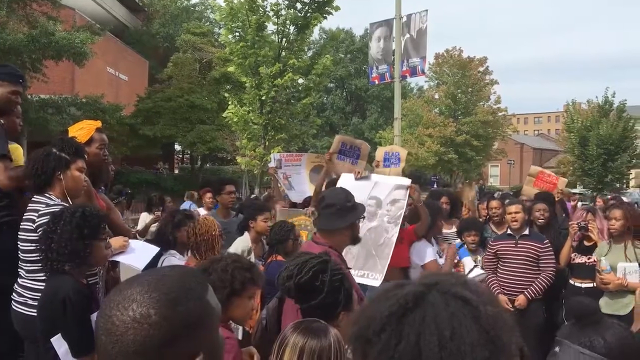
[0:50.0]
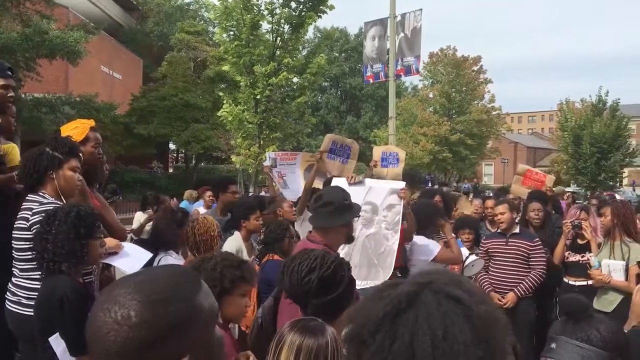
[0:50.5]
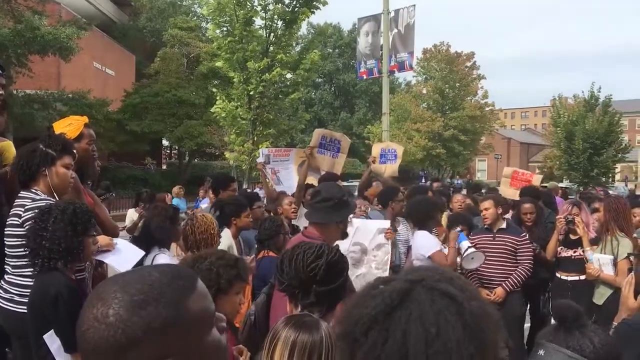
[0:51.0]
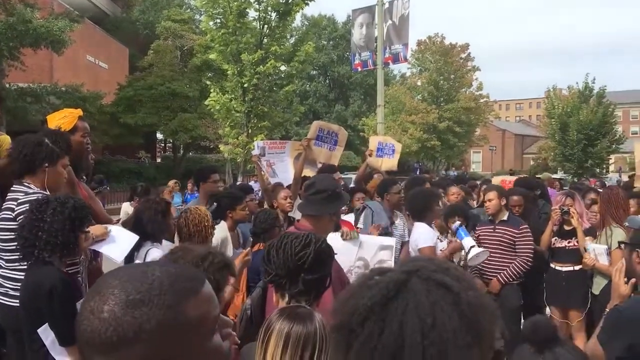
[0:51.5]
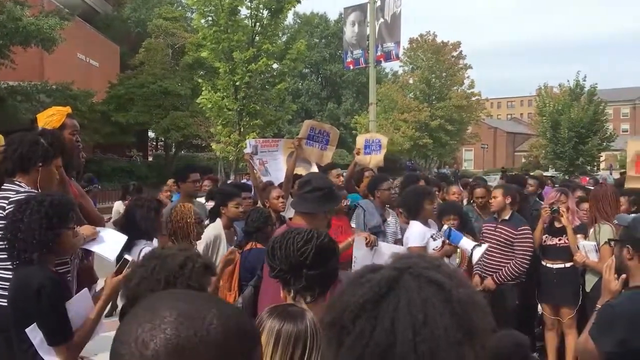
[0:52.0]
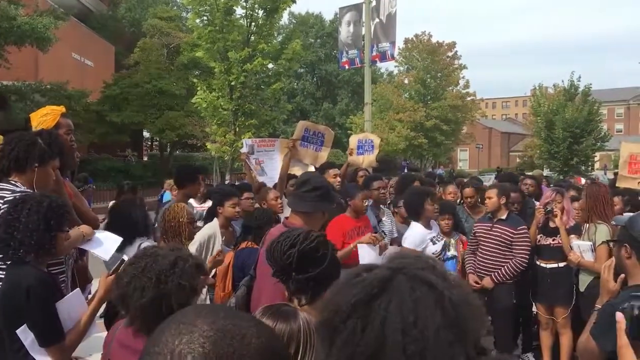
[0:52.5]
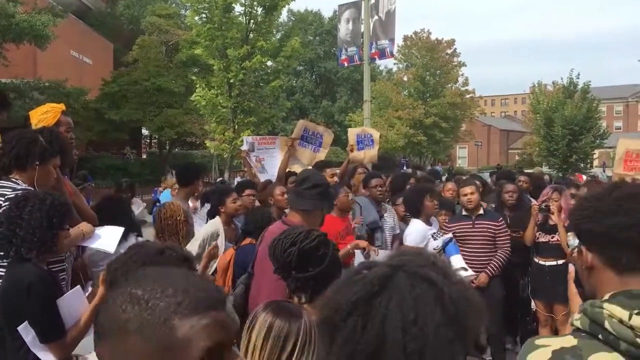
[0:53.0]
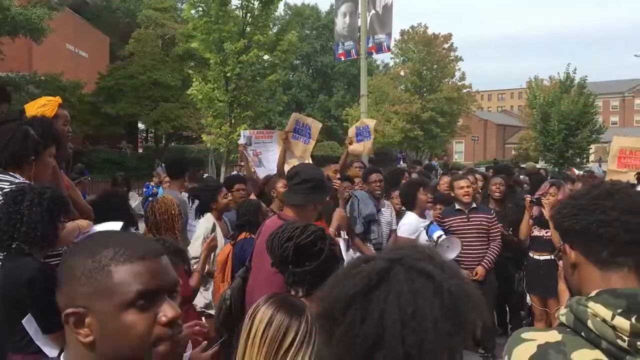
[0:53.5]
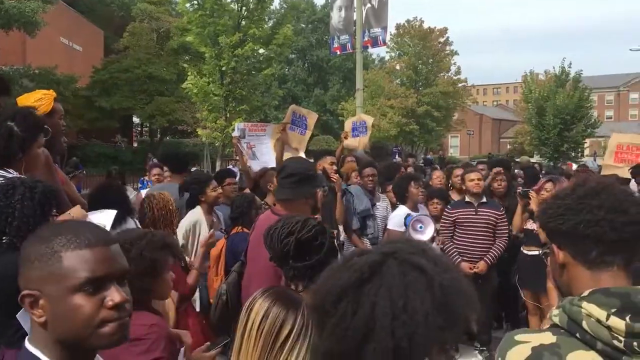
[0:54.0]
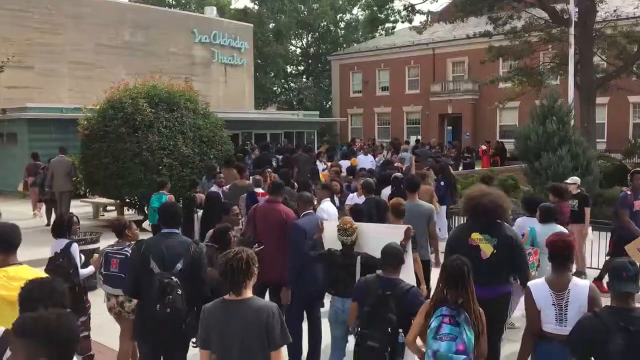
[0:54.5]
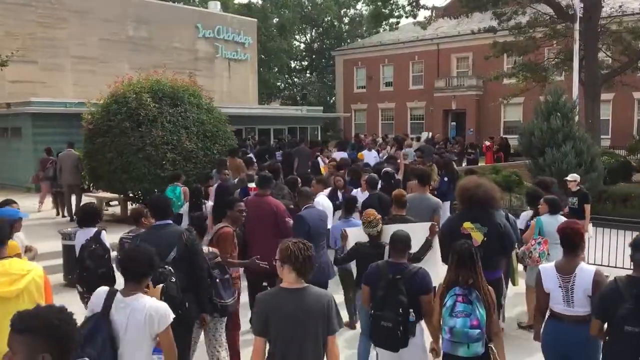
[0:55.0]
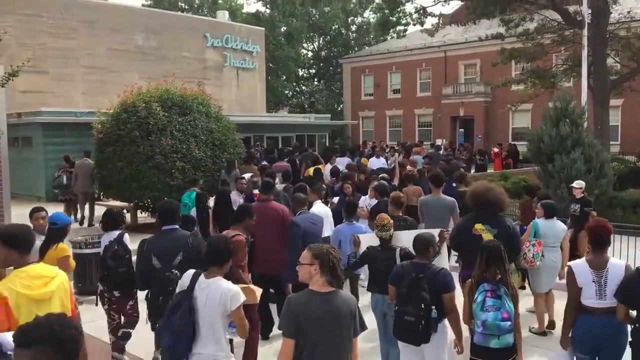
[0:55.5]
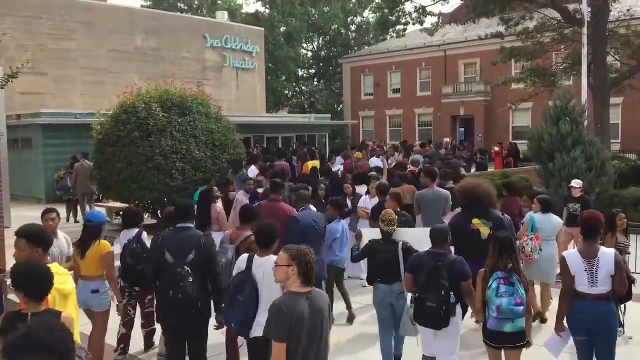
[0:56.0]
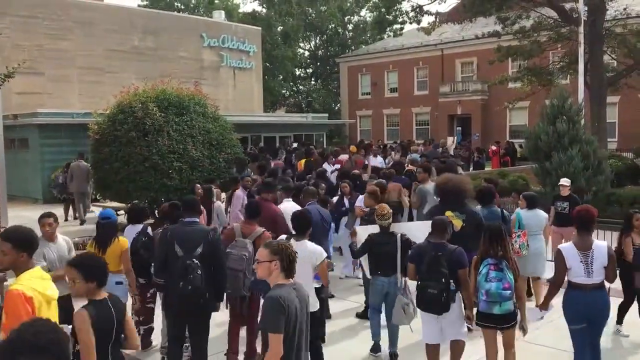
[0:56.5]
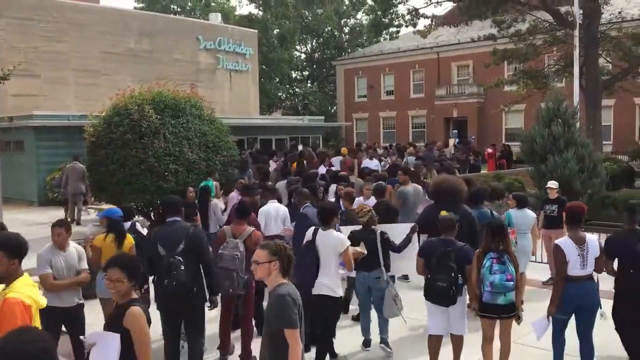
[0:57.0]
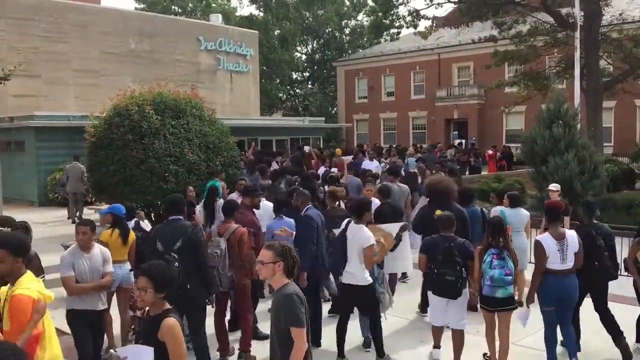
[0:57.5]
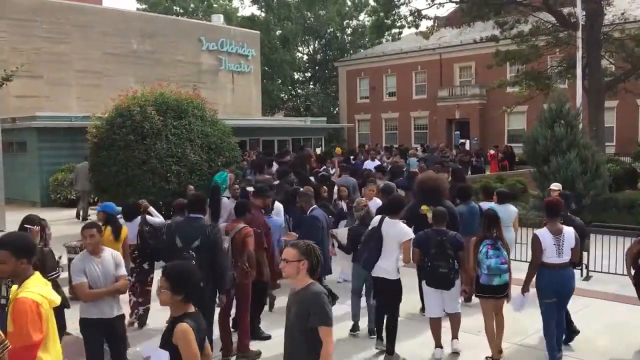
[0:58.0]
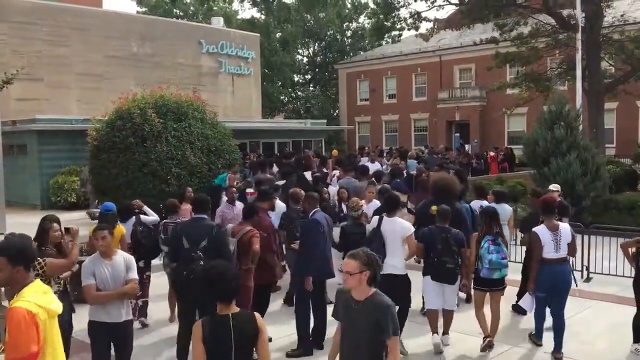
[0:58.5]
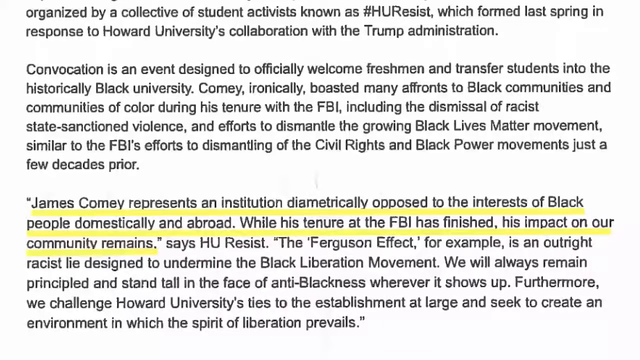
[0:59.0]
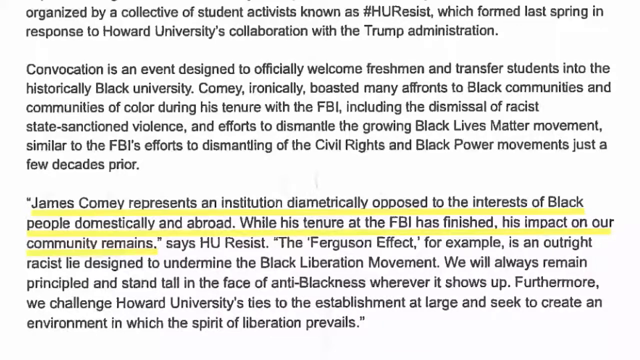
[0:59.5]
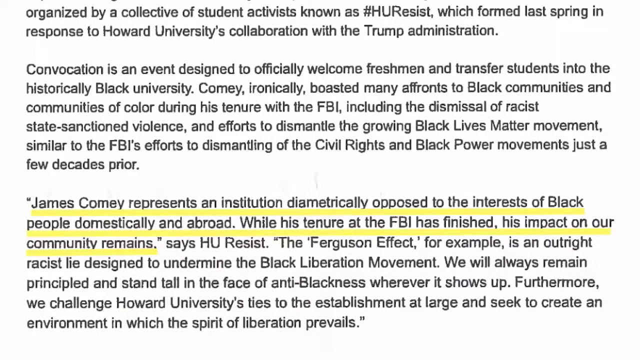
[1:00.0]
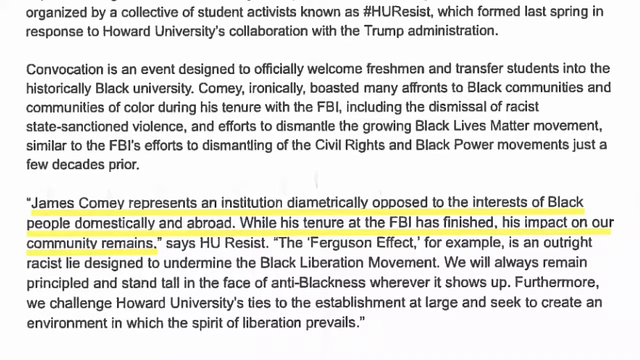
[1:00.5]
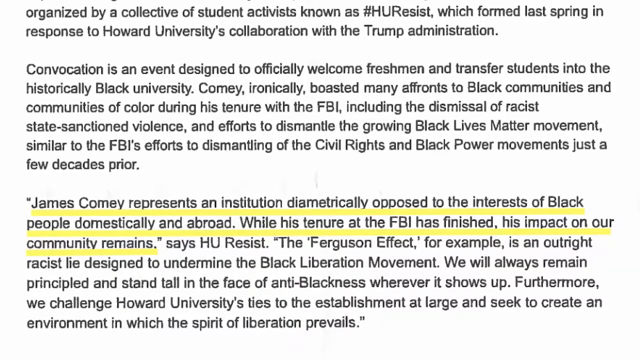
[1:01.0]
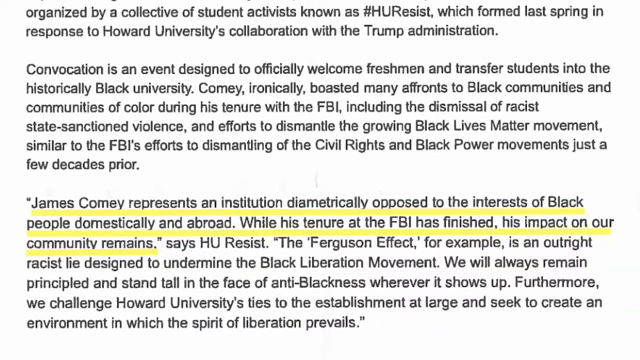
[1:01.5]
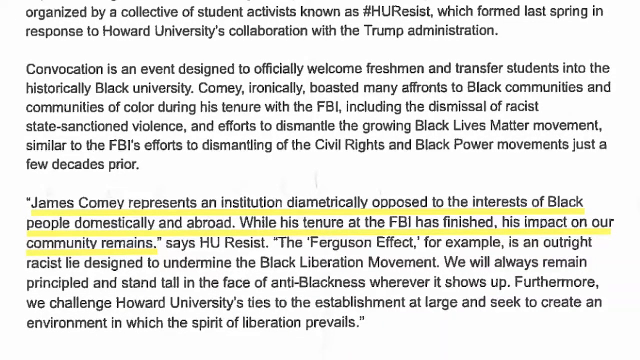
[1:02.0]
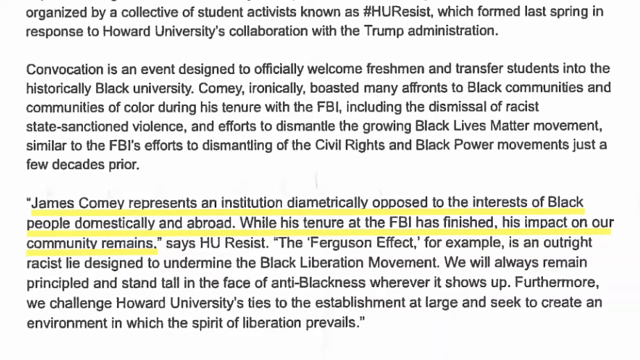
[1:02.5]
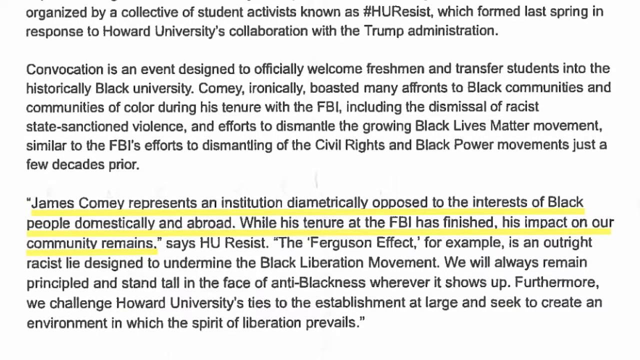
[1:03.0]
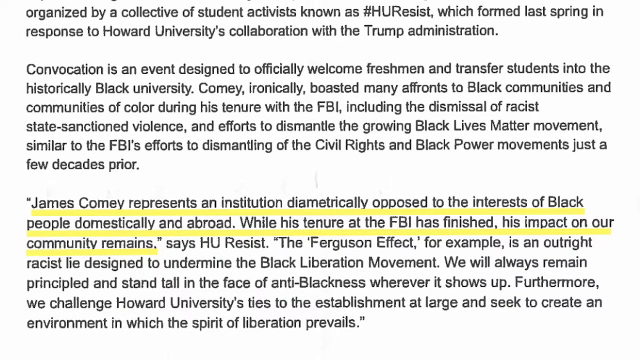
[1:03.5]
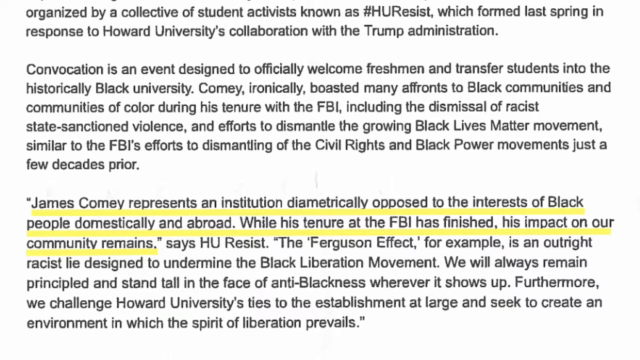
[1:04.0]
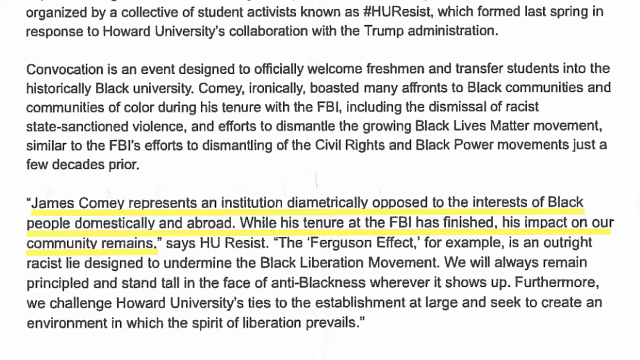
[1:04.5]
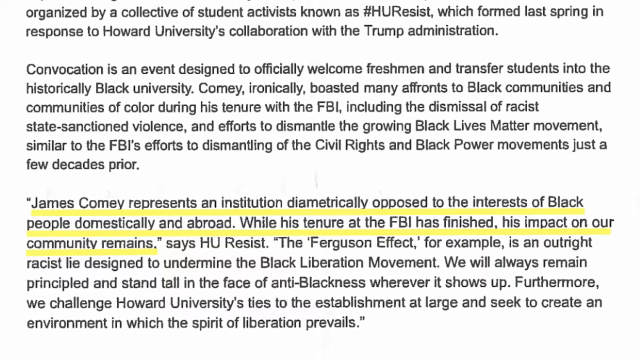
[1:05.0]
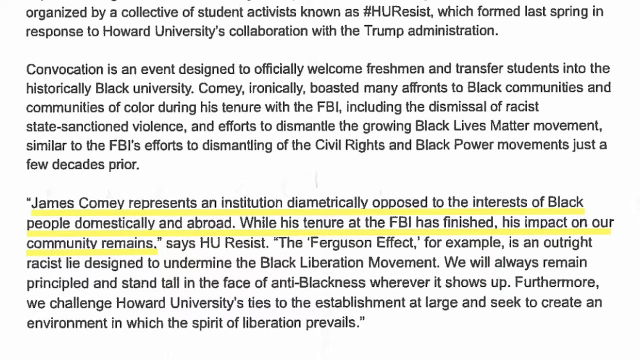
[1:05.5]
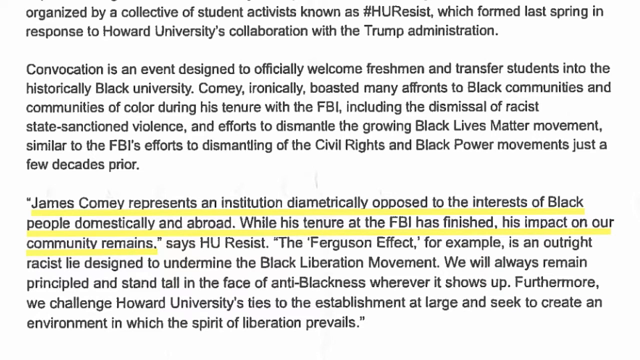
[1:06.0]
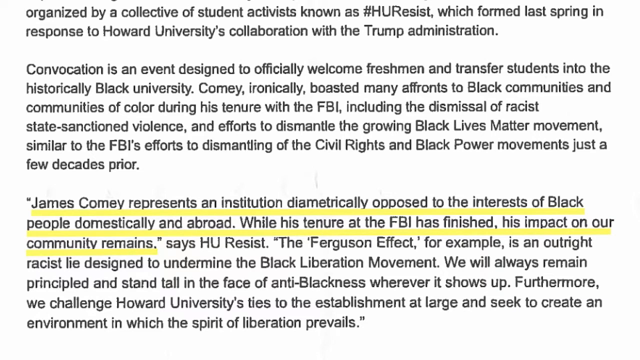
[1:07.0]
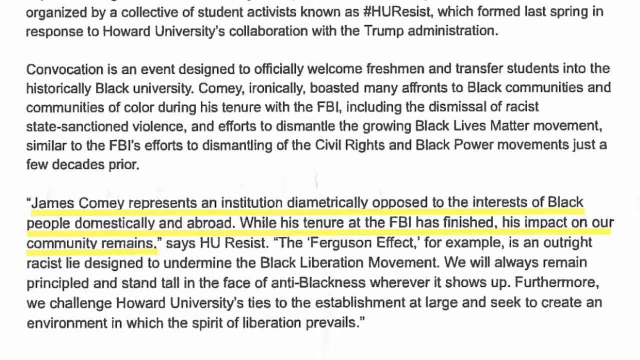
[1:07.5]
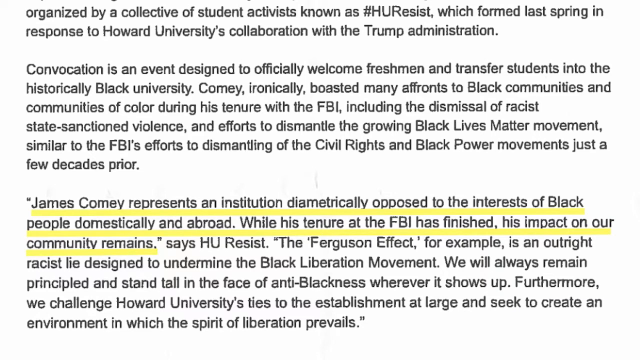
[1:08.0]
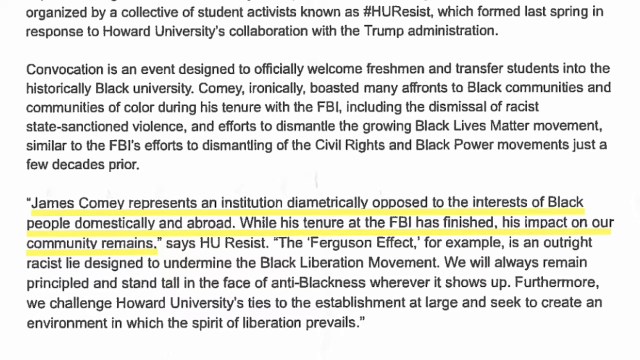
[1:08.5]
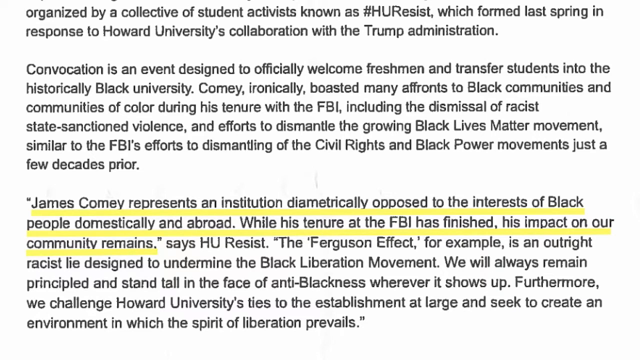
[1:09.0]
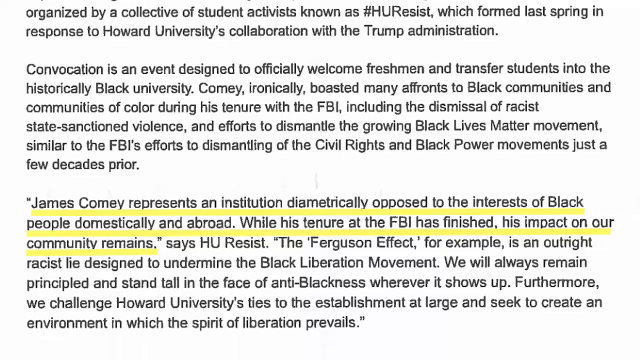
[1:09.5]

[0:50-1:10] The protest continues, with more people holding signs. The view switches to a white background with black text, which seems to be a report, with part of the text highlighted in yellow. The orderly protesters hold signs and are now marching. The white paper with black text appears again. The protest is apparently in response to Howard University's collaboration with the Trump administration, apparently the first one, as the video appears to be from 2017. There are Black Lives Matter signs, and the marchers head toward another building. The text refers to civil rights and the black power movement, and the highlighted part is about James Comey. A young man who is a student, perhaps part of the same protest, is interviewed. The protesters march through the Howard University campus. The text mentions a group called HU resists, which seems to stand for Howard University resists, a movement within Howard University.